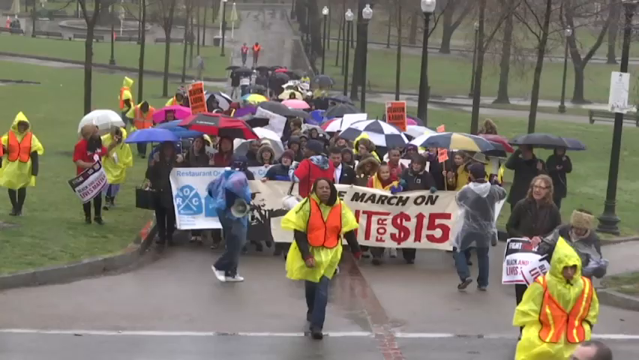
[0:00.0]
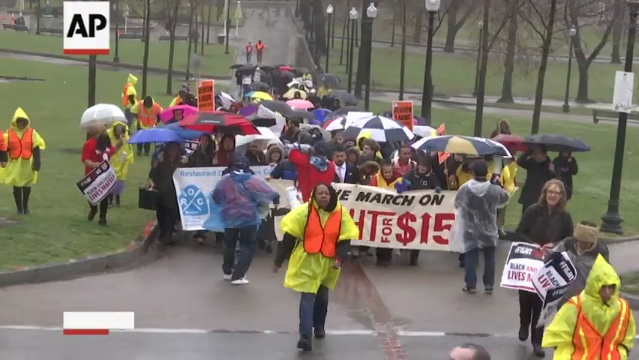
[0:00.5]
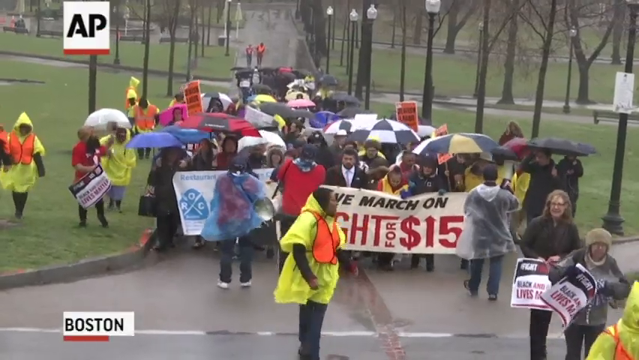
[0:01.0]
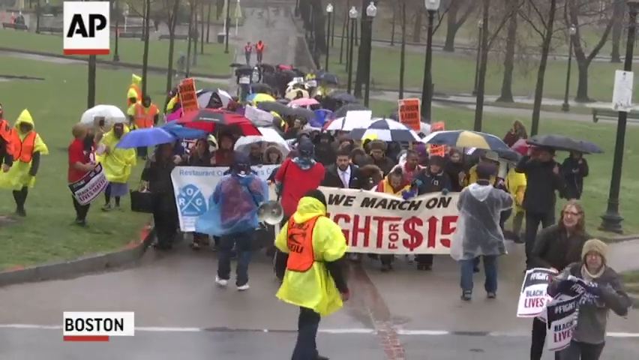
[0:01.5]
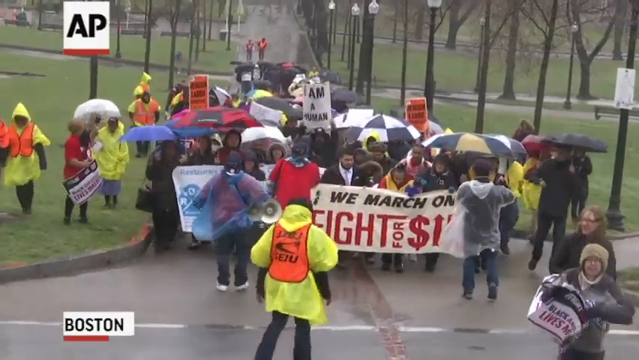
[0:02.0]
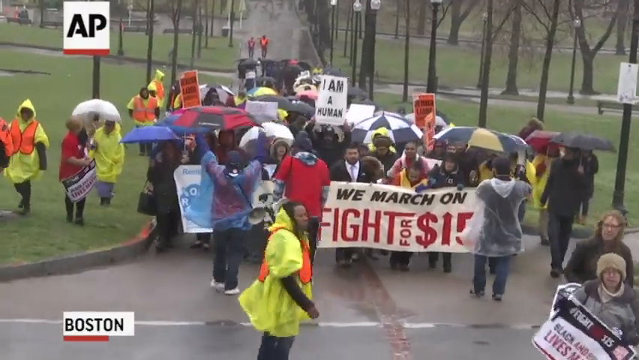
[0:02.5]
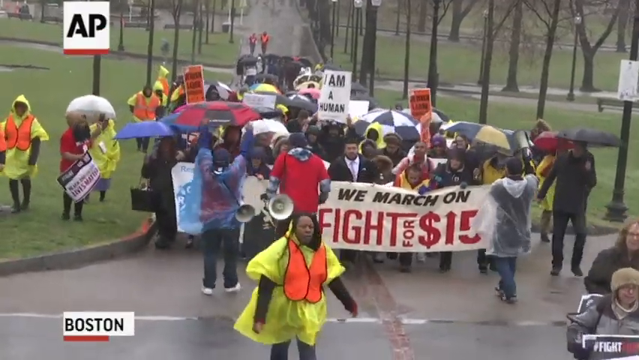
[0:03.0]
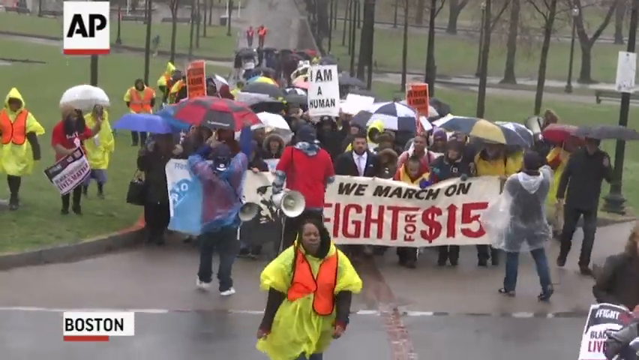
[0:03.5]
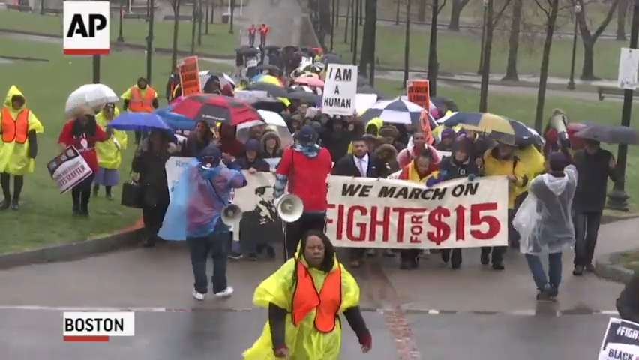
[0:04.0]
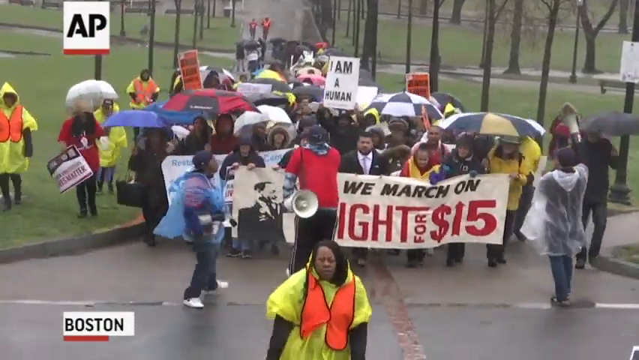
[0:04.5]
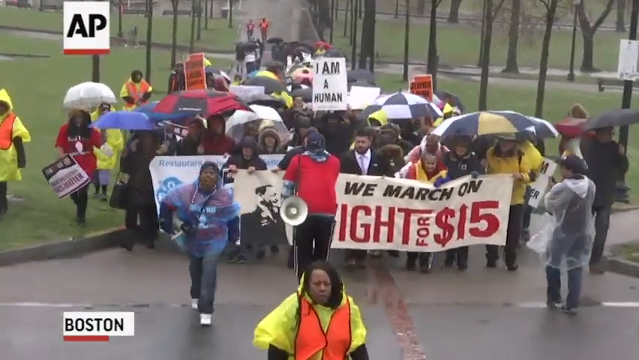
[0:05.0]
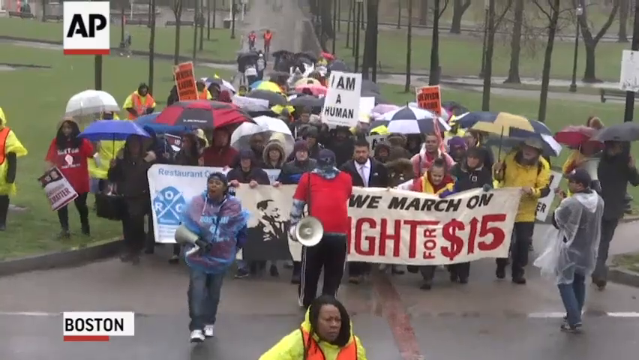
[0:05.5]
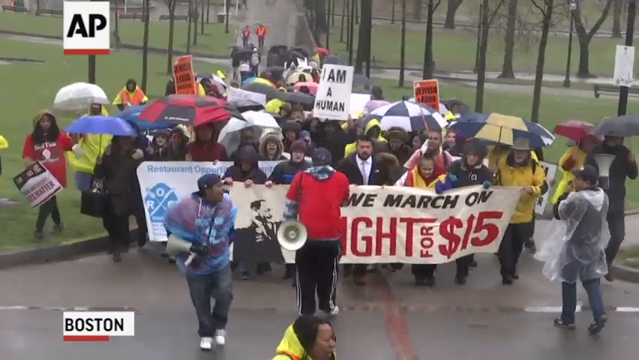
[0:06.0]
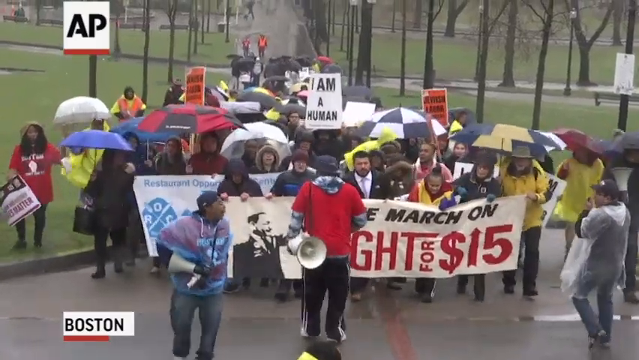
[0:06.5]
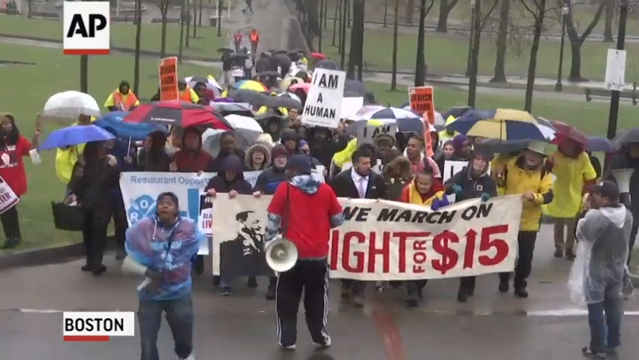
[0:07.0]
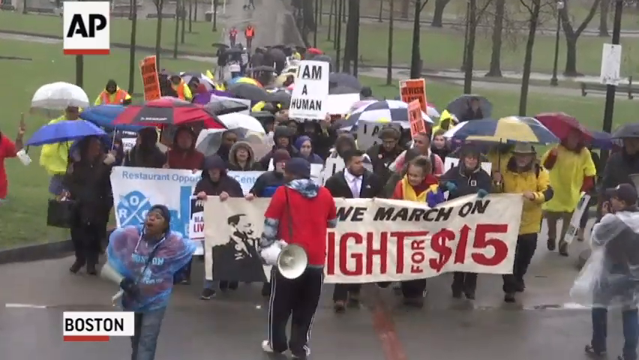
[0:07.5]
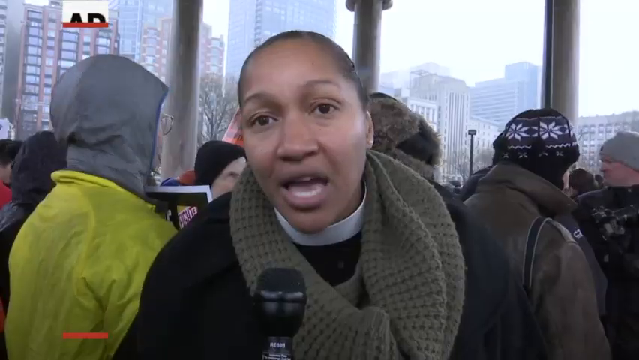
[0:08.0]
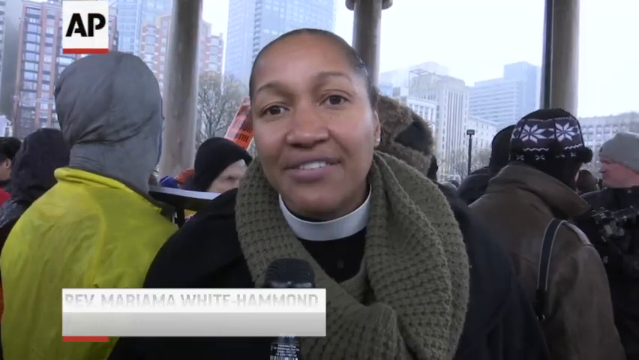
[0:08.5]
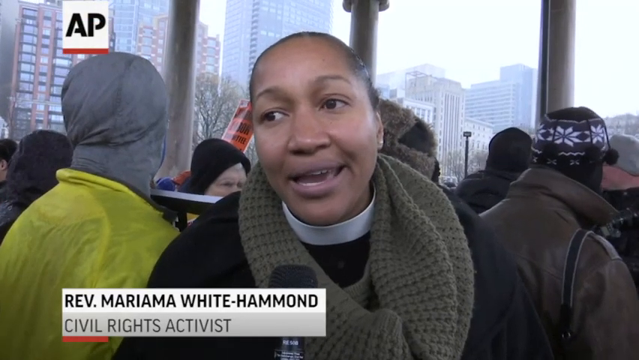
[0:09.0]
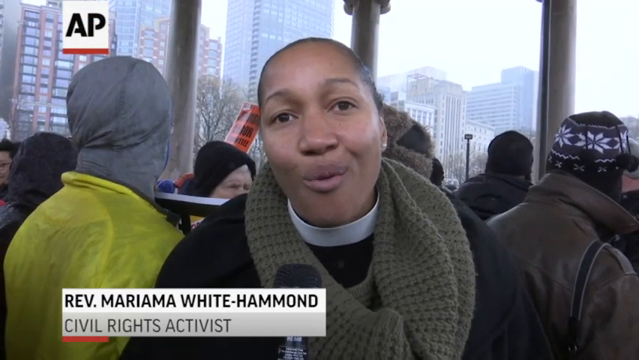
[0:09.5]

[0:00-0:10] A protest takes place in pouring rain, with people standing under lots of umbrellas and wearing ponchos and raincoats. They are in the middle of what looks like a park area, and probably 100 to 150 people are gathered, holding signs. One reads "we march on fight for $15", and there is a restaurant opportunities banner. People, civil rights activists, are being interviewed. The protesters have loudspeakers and shout with their hands up. Reverend Mariama, a civil rights activist, speaks on their behalf.